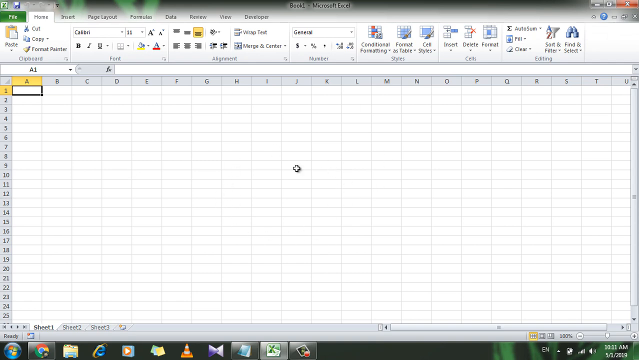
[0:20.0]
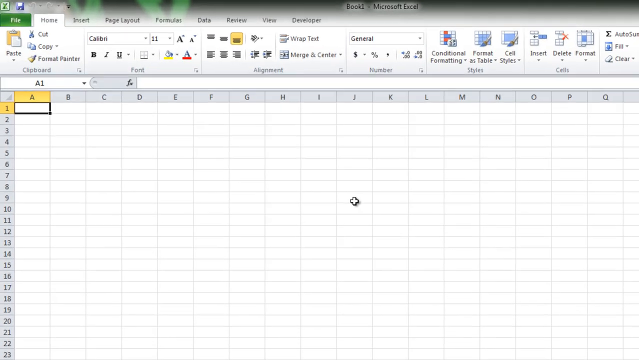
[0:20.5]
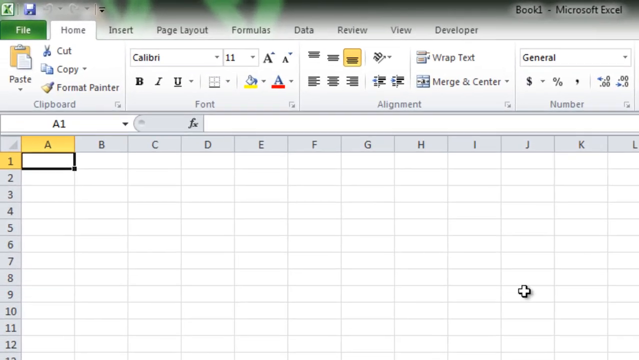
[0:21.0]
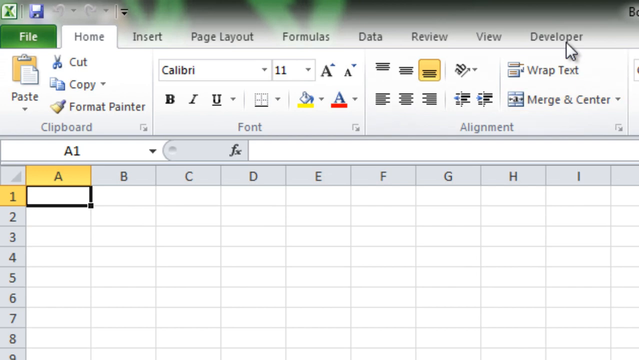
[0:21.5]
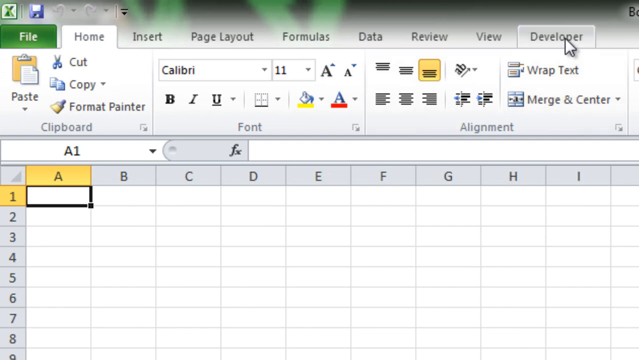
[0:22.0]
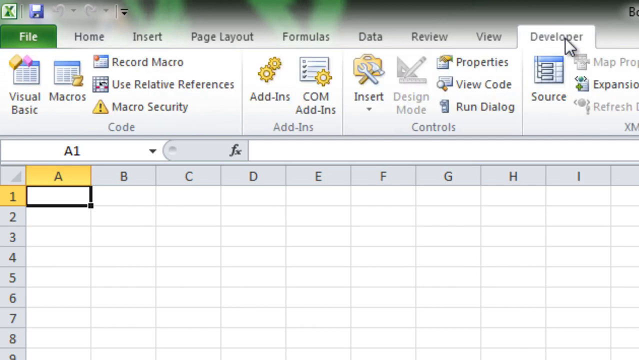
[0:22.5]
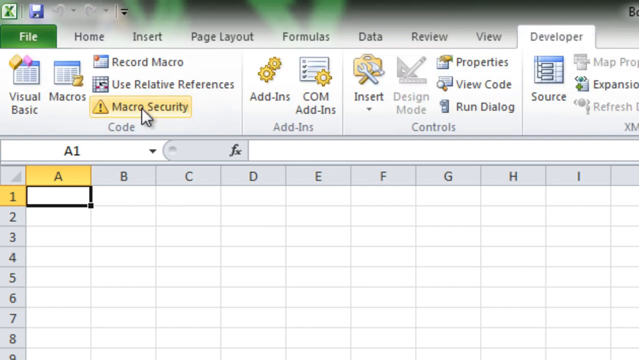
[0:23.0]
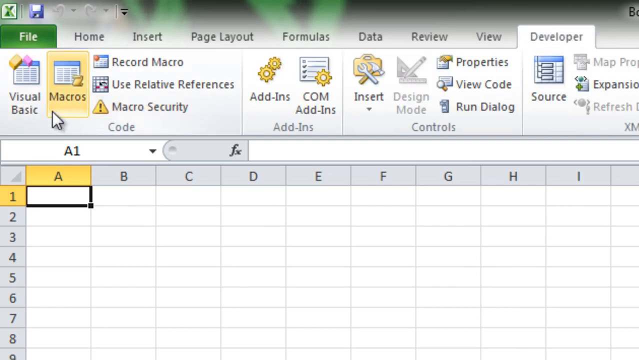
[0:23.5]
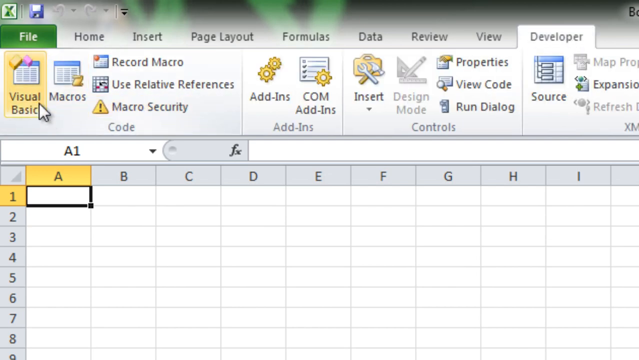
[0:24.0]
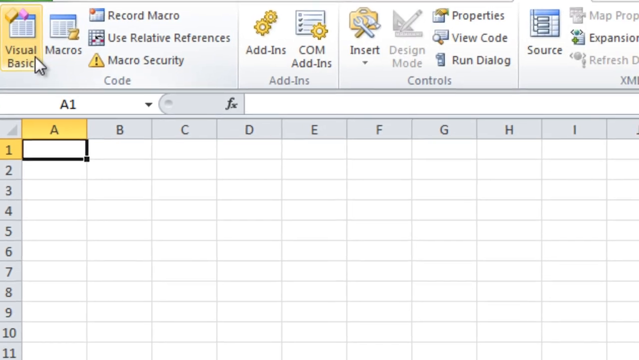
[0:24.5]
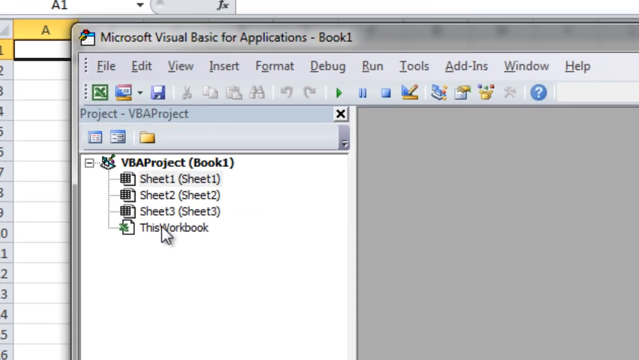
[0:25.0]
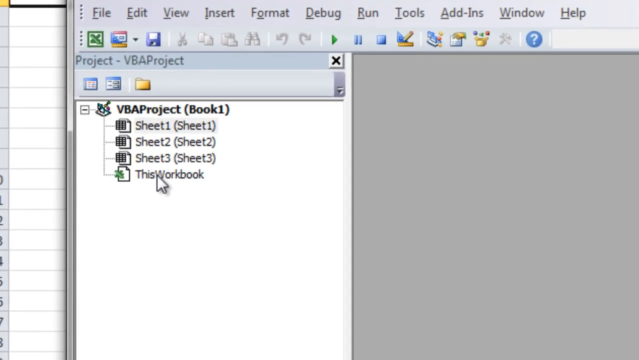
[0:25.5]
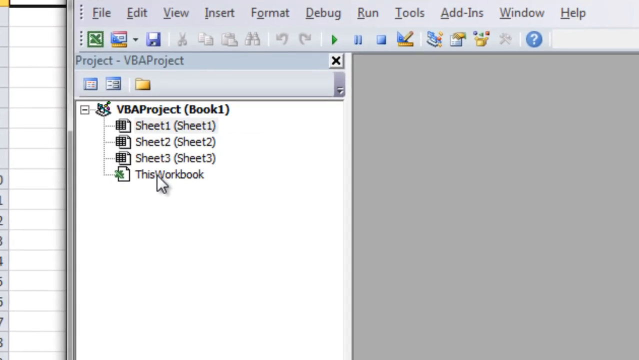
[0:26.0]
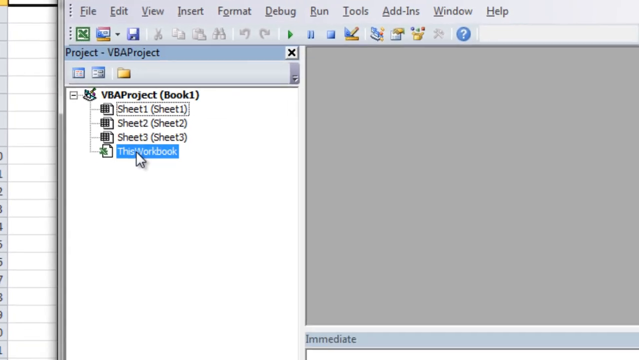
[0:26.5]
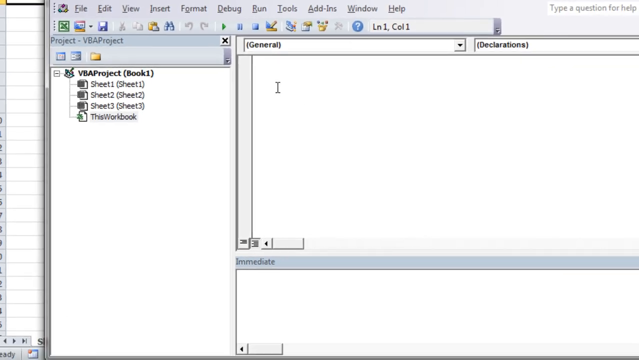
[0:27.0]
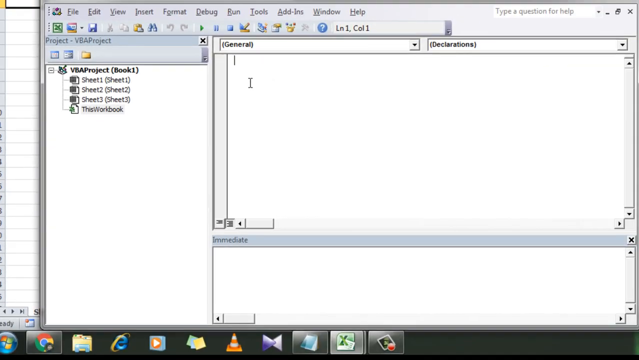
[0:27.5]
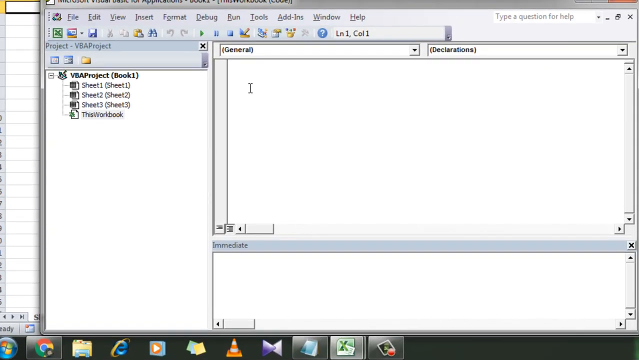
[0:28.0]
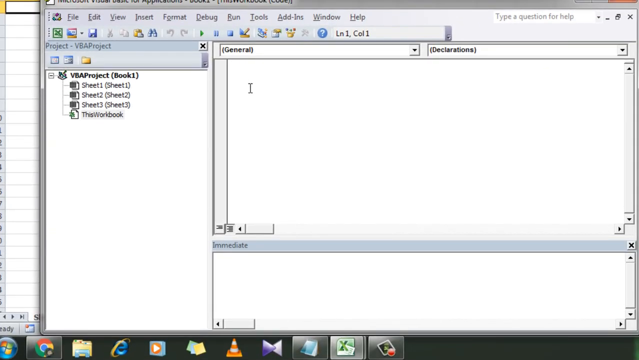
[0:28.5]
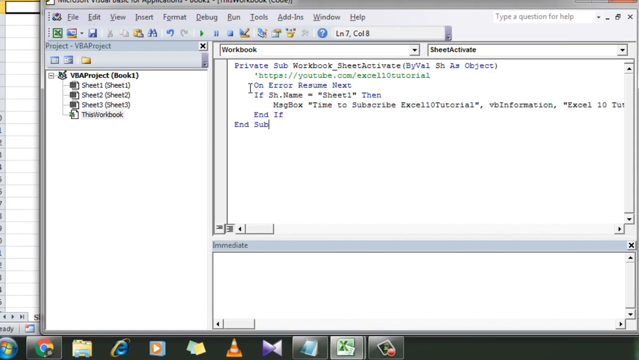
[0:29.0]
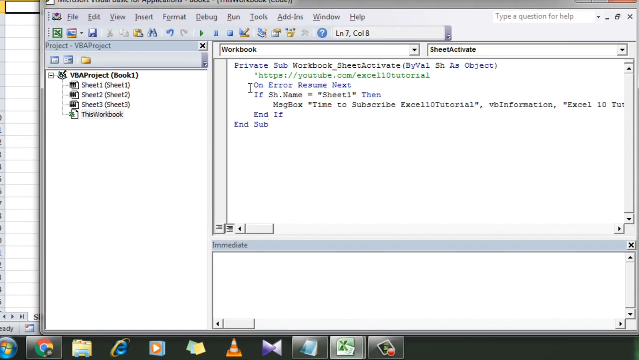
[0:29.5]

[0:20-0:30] The screen shows the whole page, then zooms into the top left, where the various tabs and sections of Excel are visible. The user moves the cursor over the Developer tab, the farthest right of the tabs at the top left, and clicks it. They then move the cursor farther to the left and click a different tab called Visual Basic. Another screen pops up in the middle of the screen, and the view zooms out to show the whole newly opened window, which has different sections. The user clicks on the open white area and seems to paste in a small script.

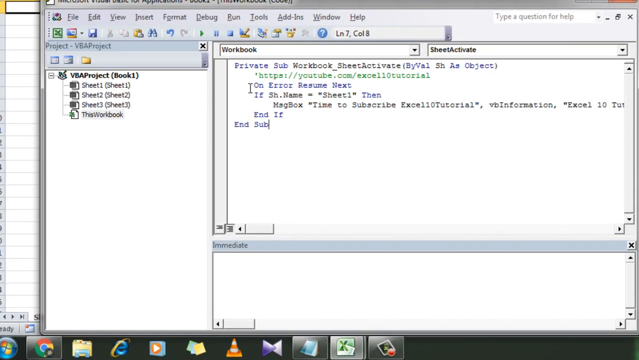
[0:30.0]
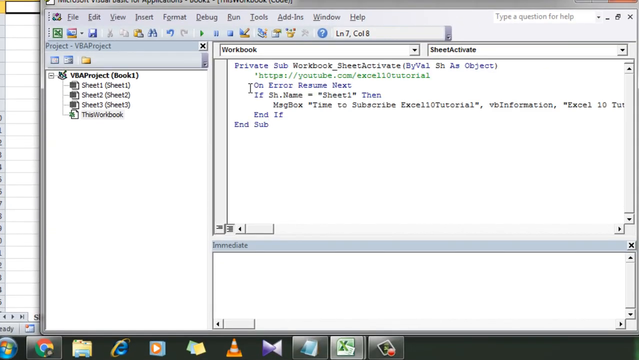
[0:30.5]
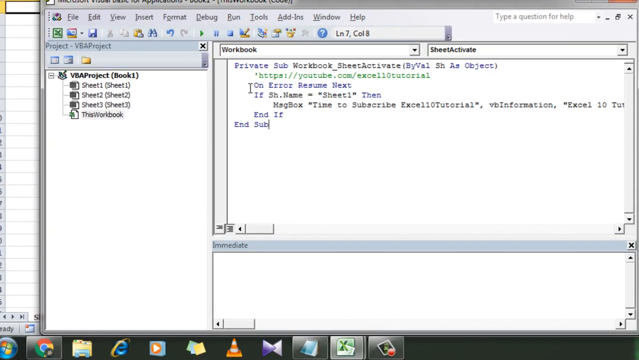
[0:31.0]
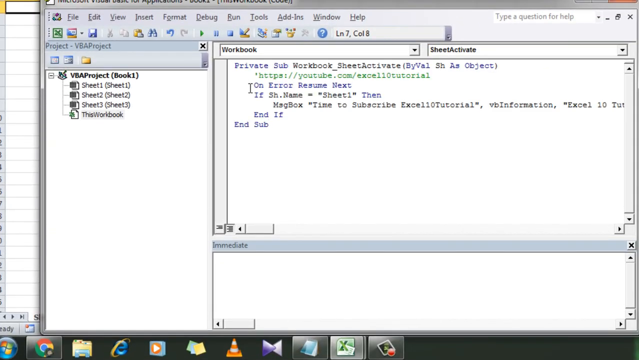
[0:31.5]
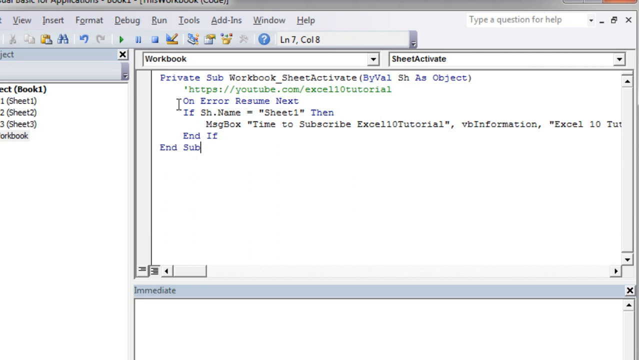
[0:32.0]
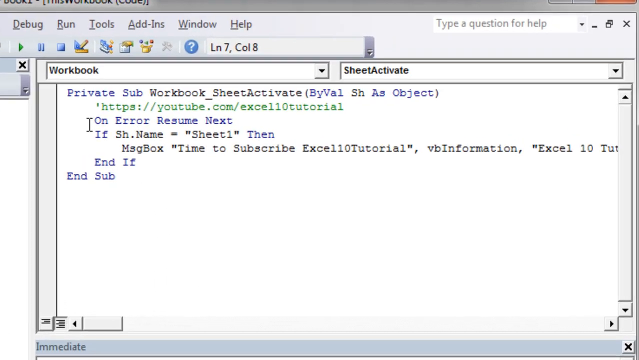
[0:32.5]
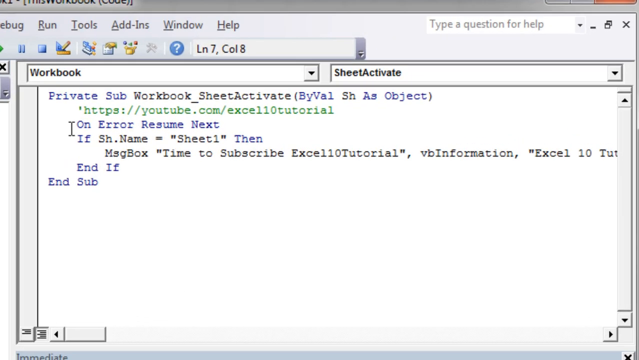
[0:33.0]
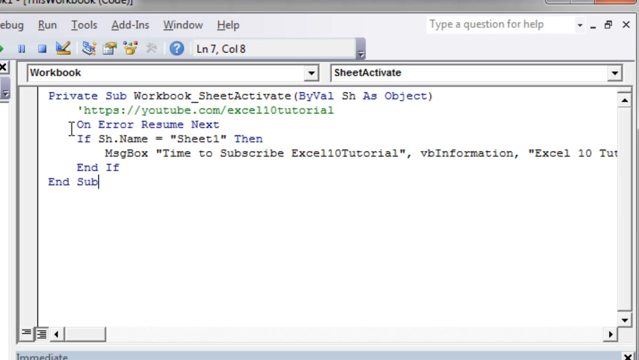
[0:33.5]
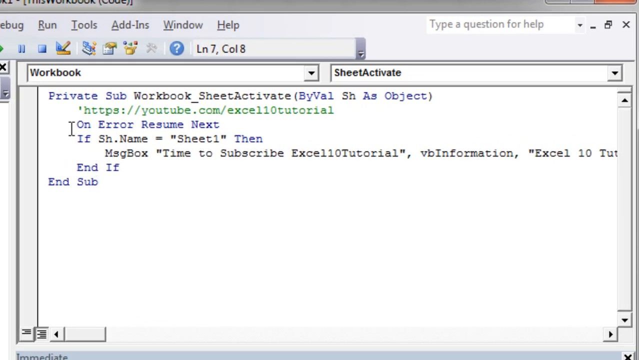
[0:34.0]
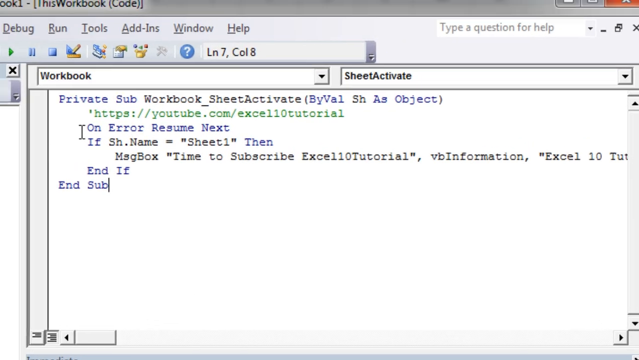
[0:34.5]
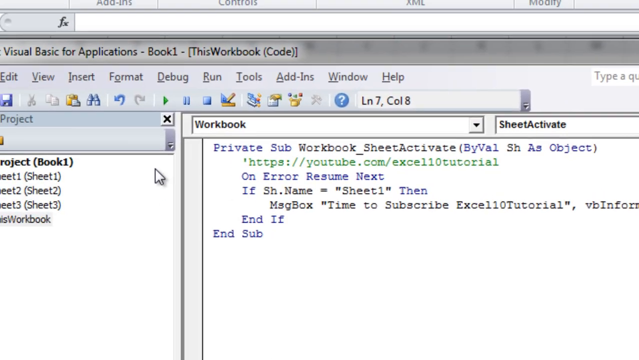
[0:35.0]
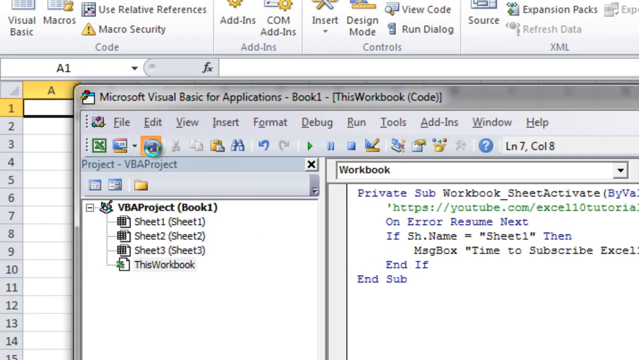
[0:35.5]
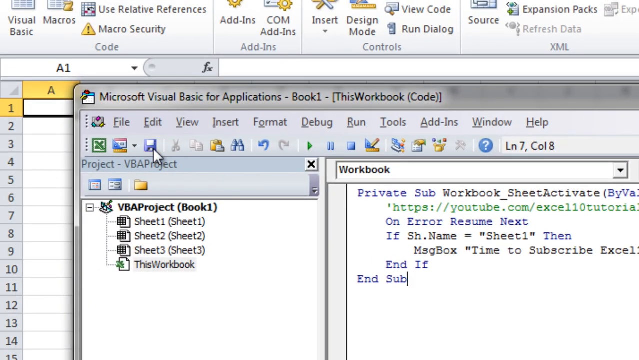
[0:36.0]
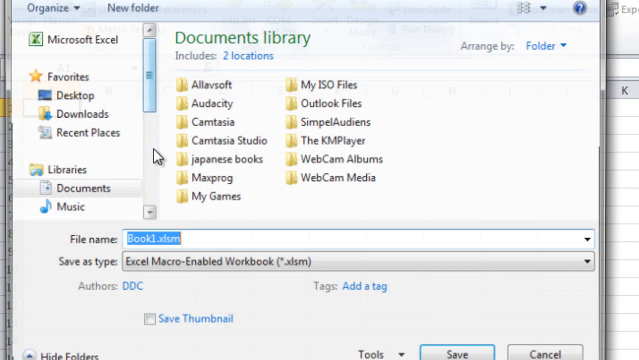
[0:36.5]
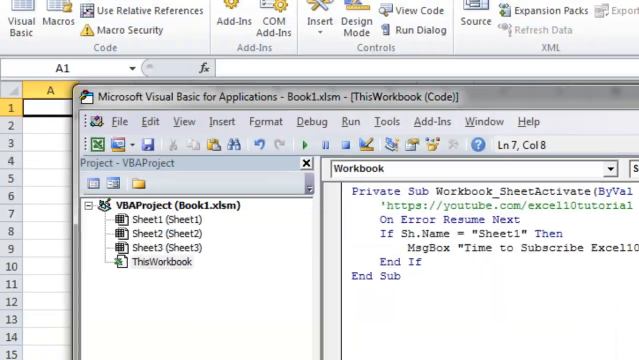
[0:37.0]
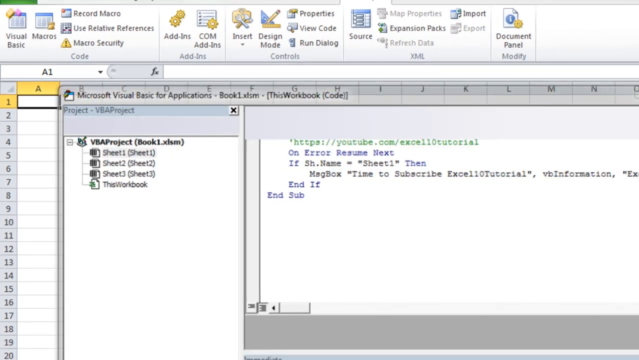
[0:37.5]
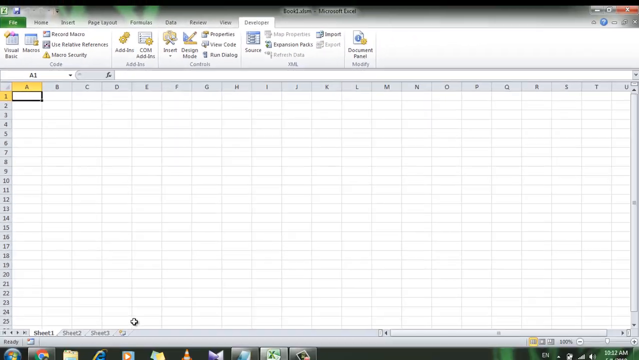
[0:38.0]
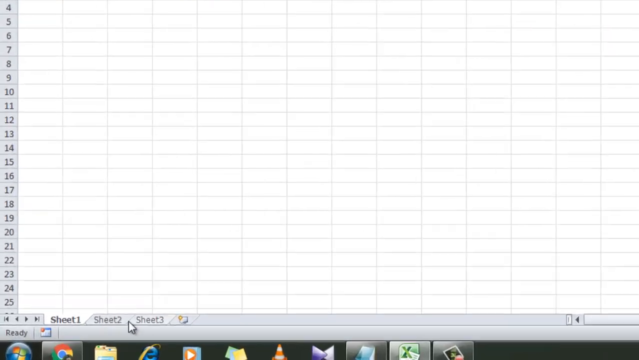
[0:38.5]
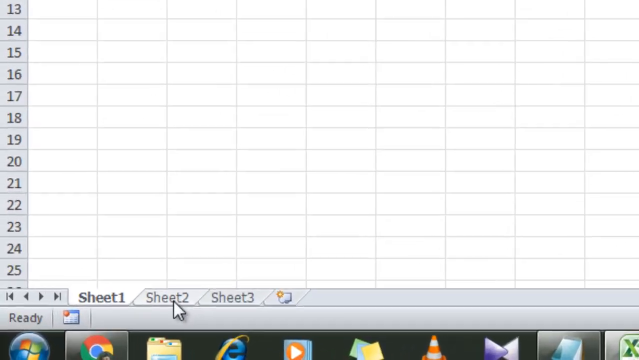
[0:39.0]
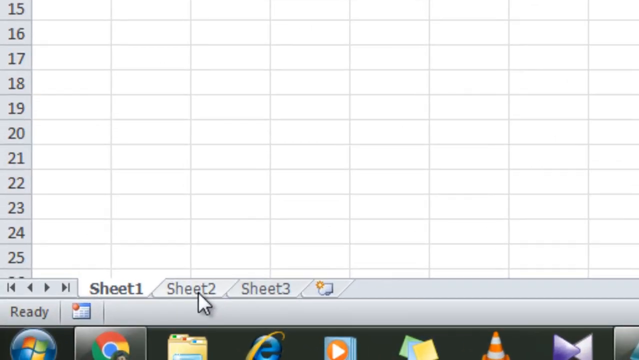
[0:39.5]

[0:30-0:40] The view seems to zoom in a little more on the right side of the new window, showing the script placed in the open white area. The view then pans over toward the top left of the window, where the user clicks a small save icon. A new window opens showing folders and where to save the file, specifically as an Excel macro-enabled workbook .xlsm file. The user seems to press enter and save the file, and the window closes.